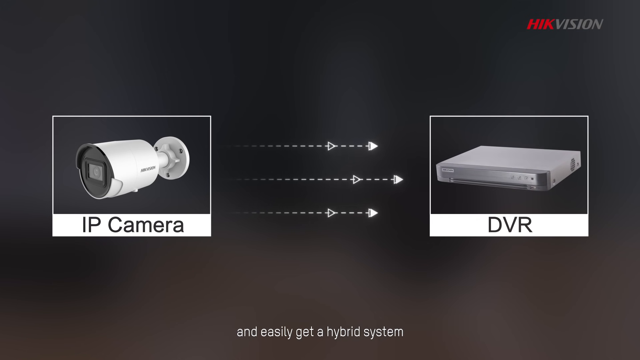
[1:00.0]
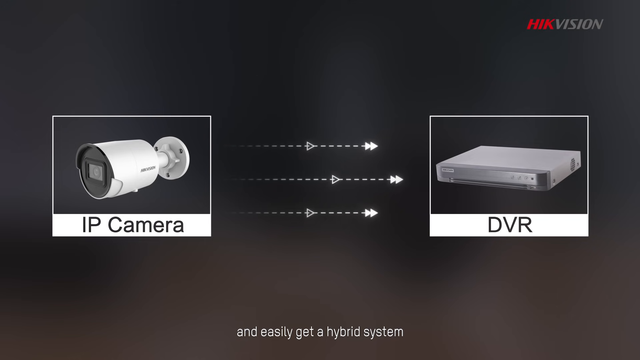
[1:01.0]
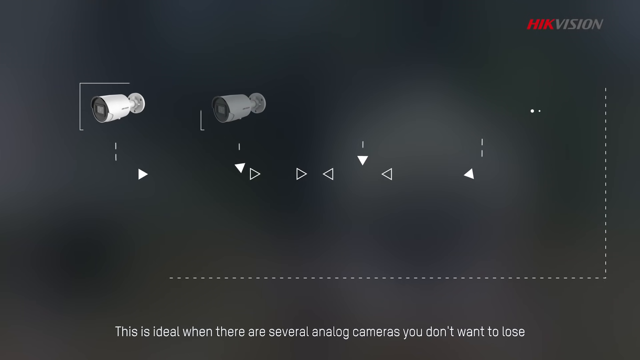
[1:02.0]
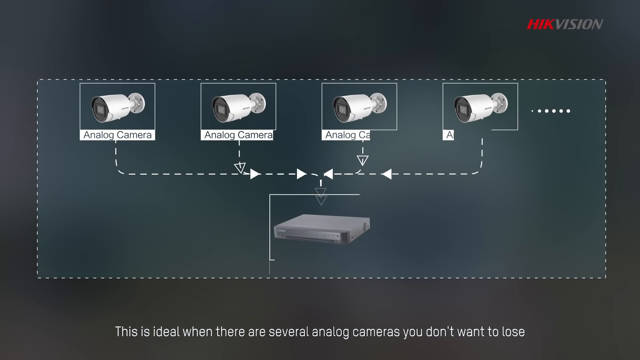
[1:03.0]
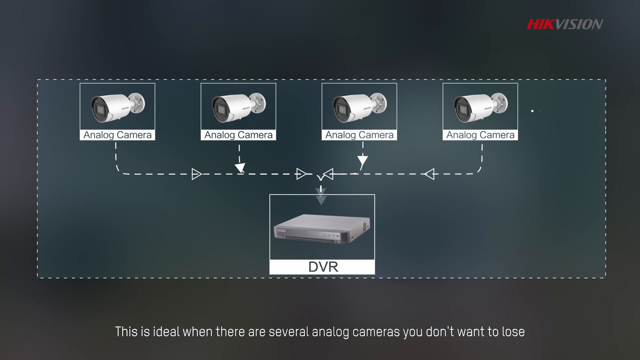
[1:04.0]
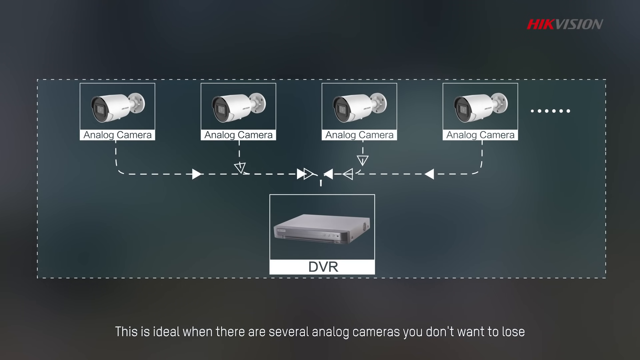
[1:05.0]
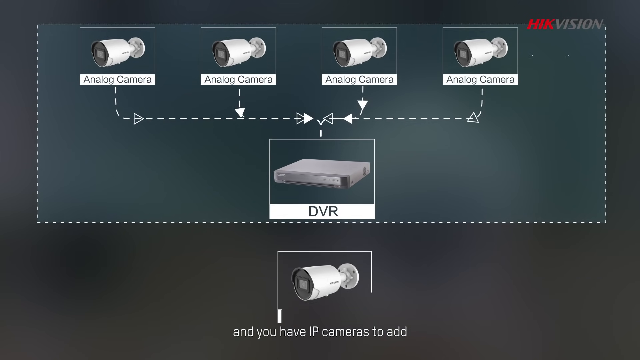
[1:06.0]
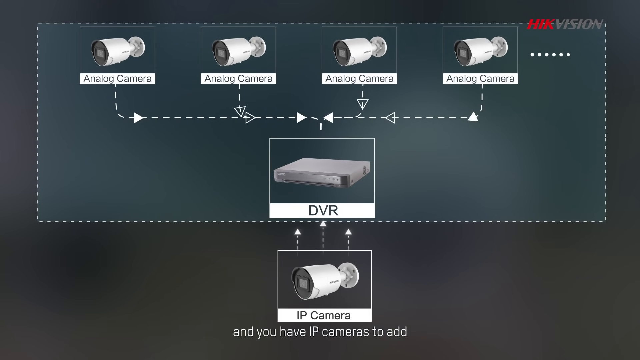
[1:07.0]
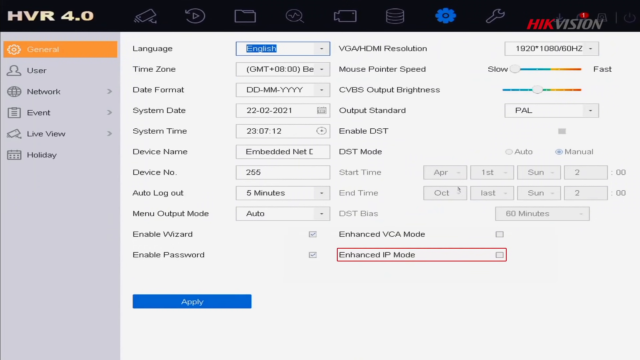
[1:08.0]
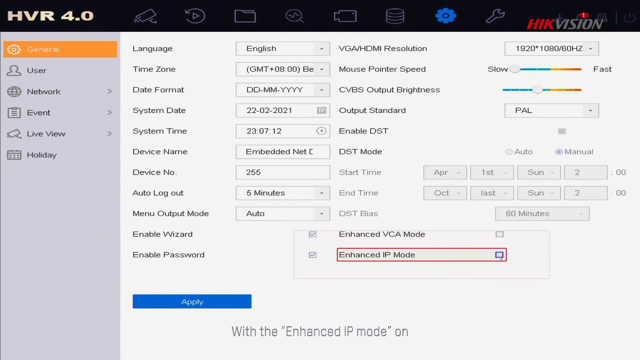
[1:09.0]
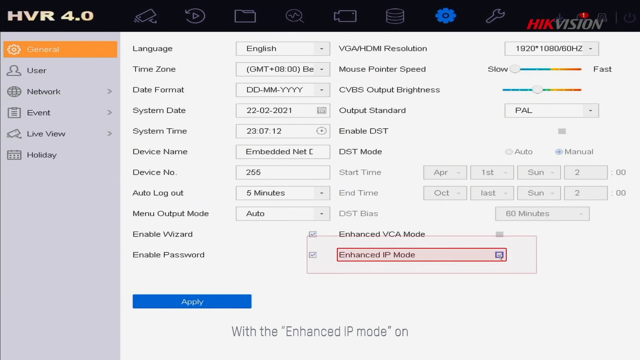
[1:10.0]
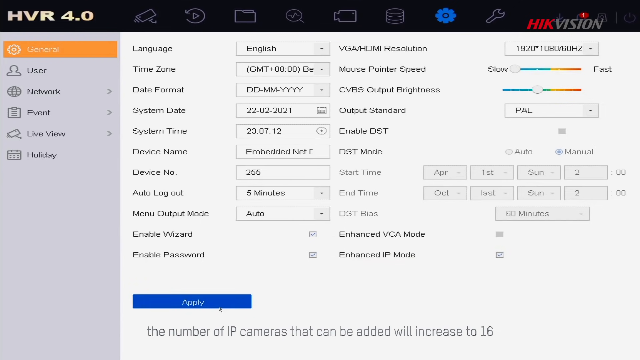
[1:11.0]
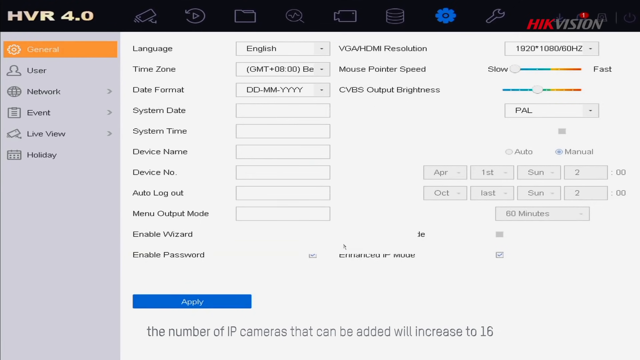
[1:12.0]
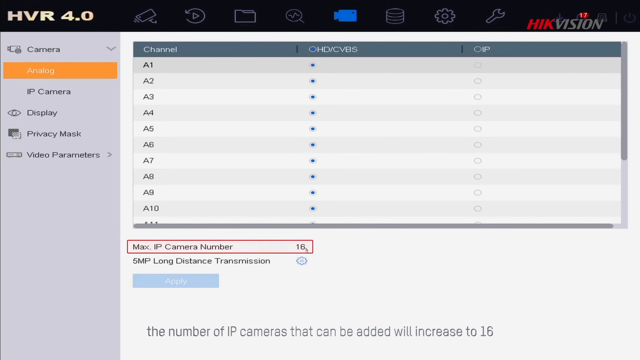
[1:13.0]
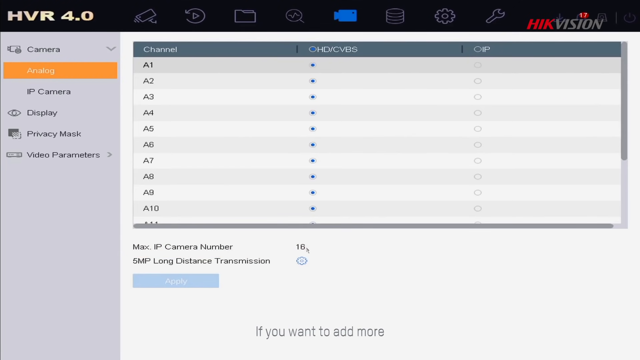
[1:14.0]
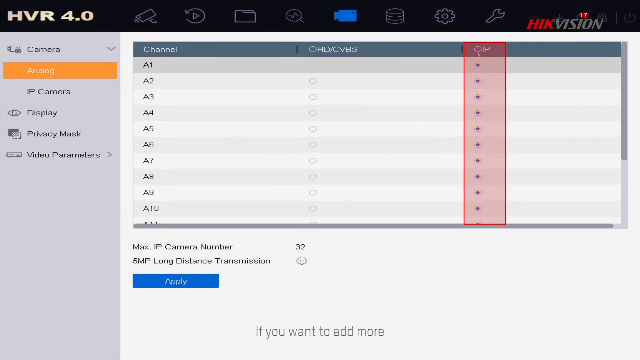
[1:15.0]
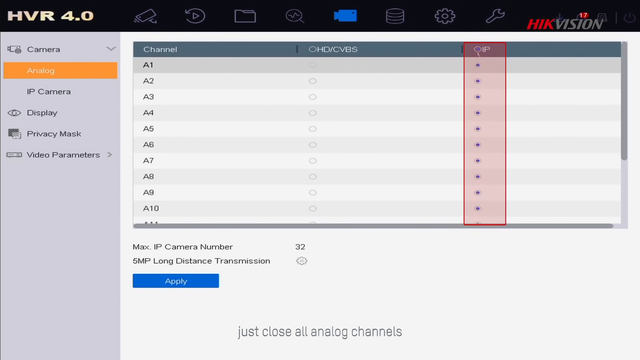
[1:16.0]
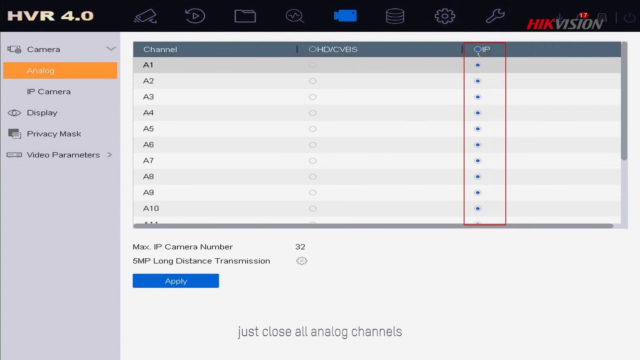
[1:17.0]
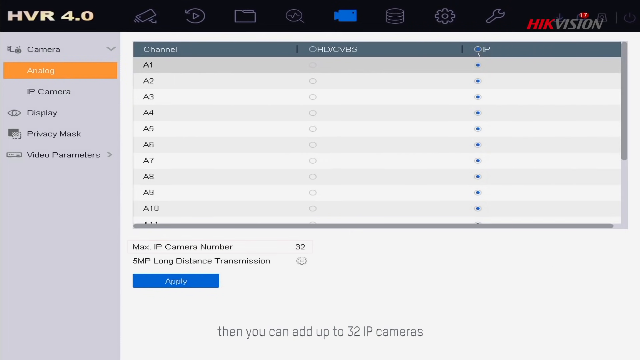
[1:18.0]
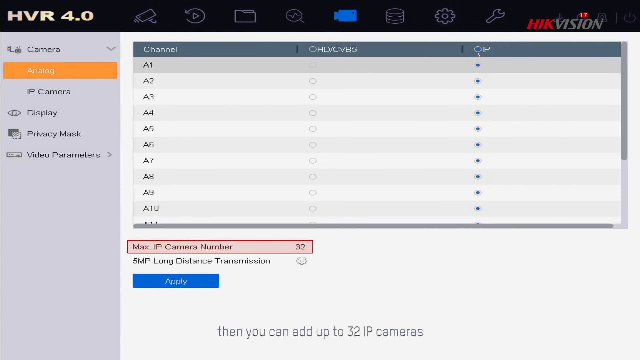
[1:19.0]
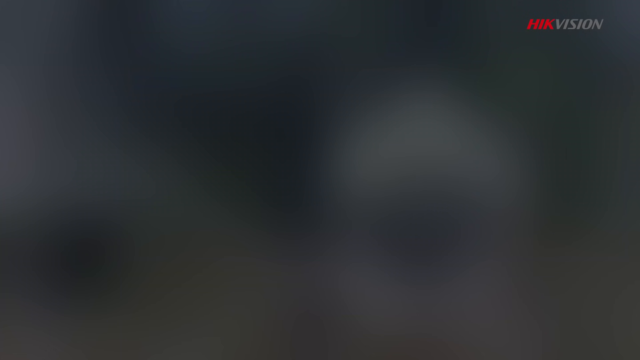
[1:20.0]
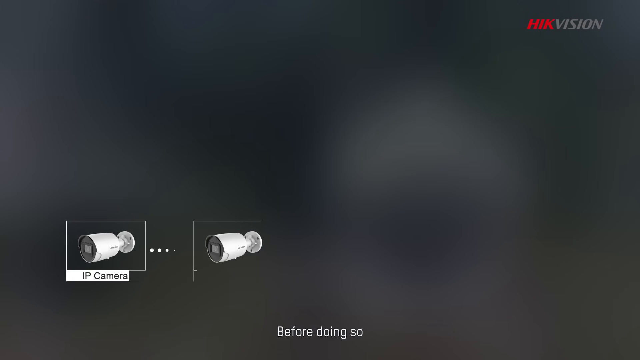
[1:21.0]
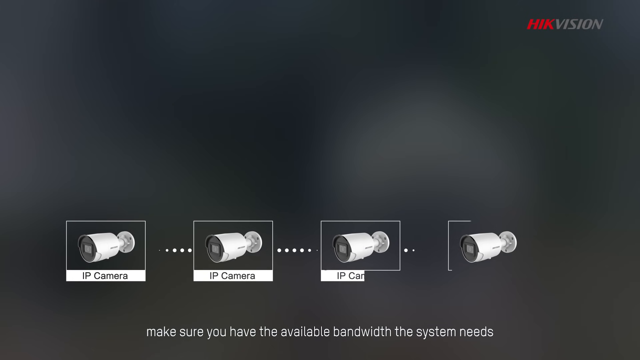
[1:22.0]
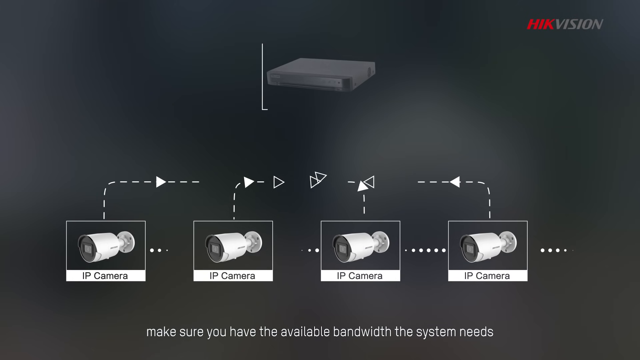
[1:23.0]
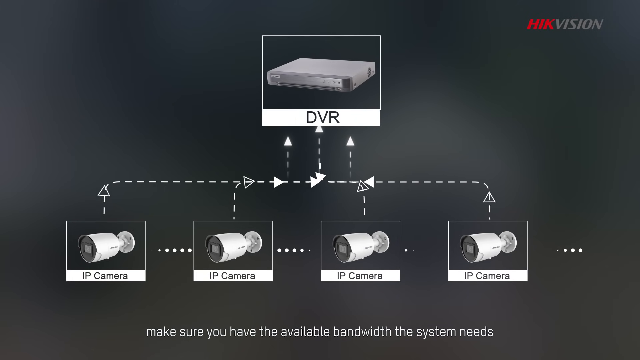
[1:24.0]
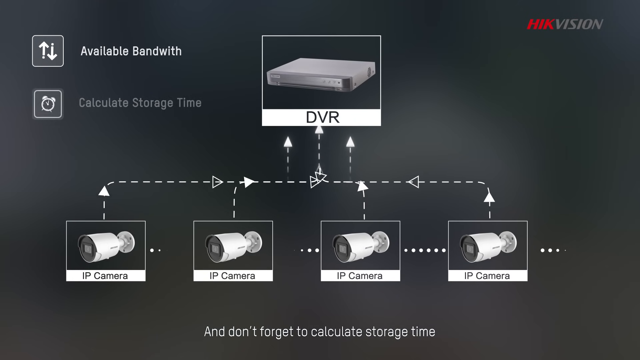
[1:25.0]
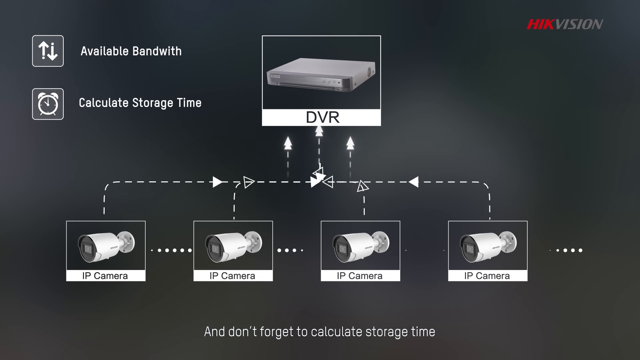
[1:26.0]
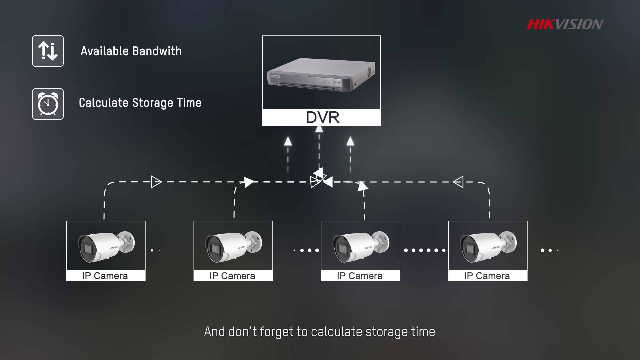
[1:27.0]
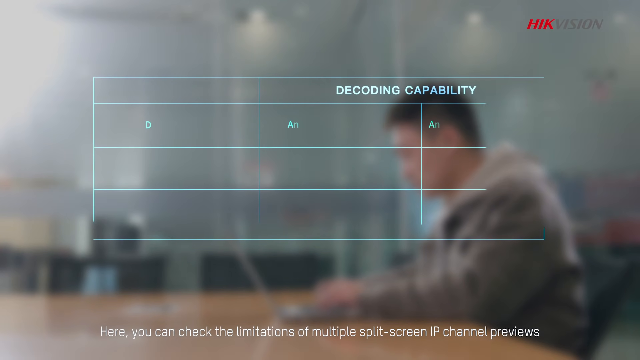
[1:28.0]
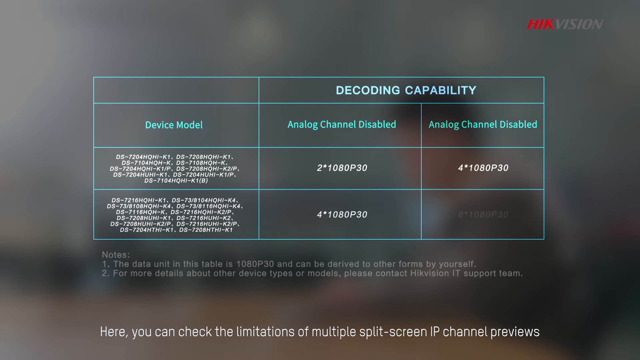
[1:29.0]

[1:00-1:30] An image shows an IP camera with arrows pointing toward the DVR, the receiver. Graphics of four analog cameras appear in little squares next to each other in the middle toward the top of the screen, and underneath, in a square that says "DVR," is the DVR receiver. Small dotted-line arrows move from all four cameras toward the DVR. Below is an IP camera that looks the same as the other cameras, just a little bigger, also pointing toward the DVR receiver. A setup screen then shows general settings where language, time zone, date, auto log out and the IP camera number can be adjusted. The next screen shows the analog settings, highlighting different features. Then four IP cameras appear at the bottom of the screen with arrows pointing to the DVR at the top, and "available bandwidth" and "calculate storage time" appear to the side.